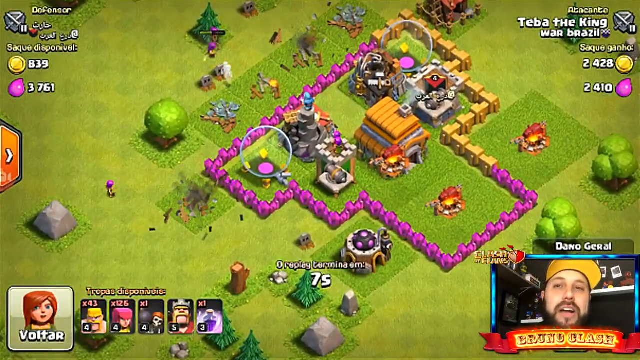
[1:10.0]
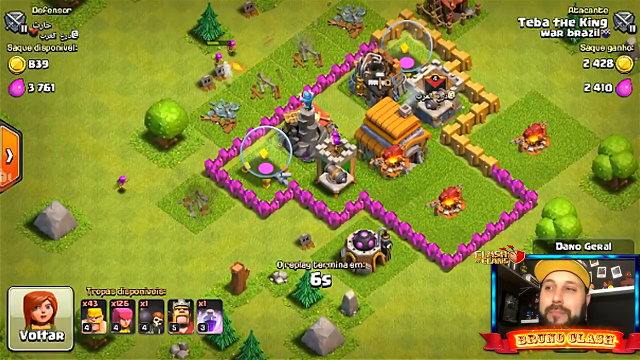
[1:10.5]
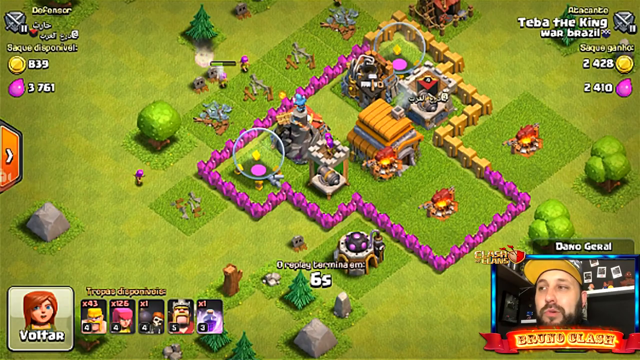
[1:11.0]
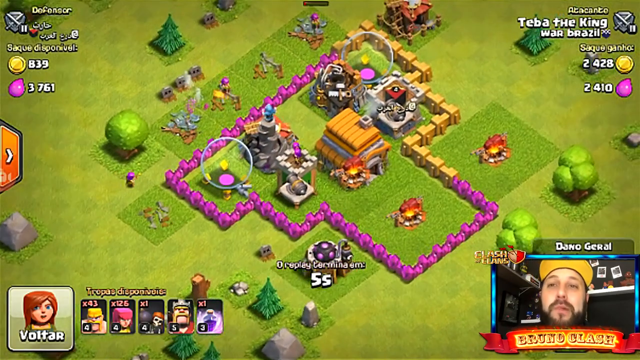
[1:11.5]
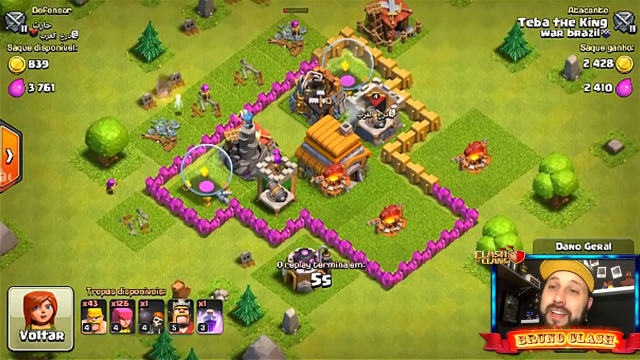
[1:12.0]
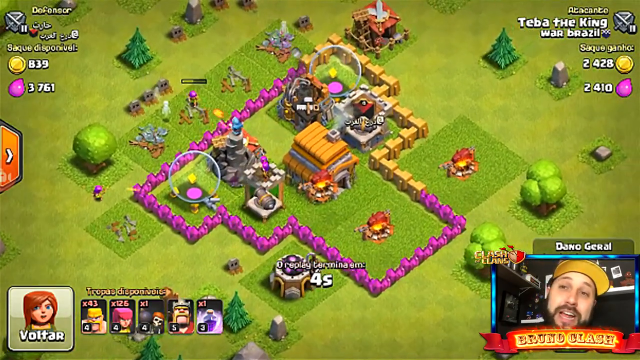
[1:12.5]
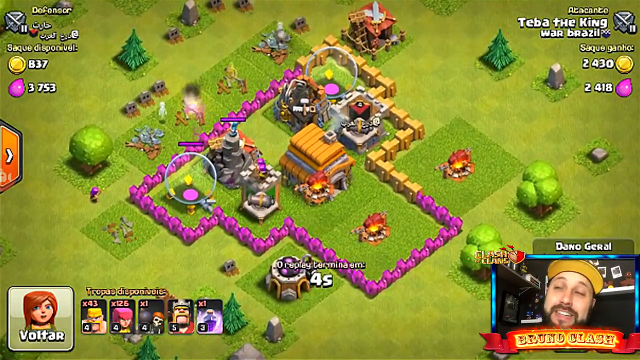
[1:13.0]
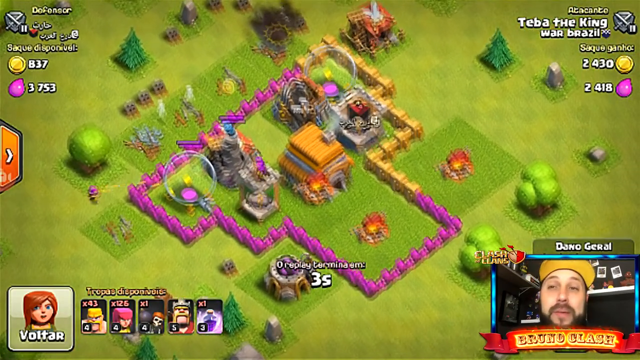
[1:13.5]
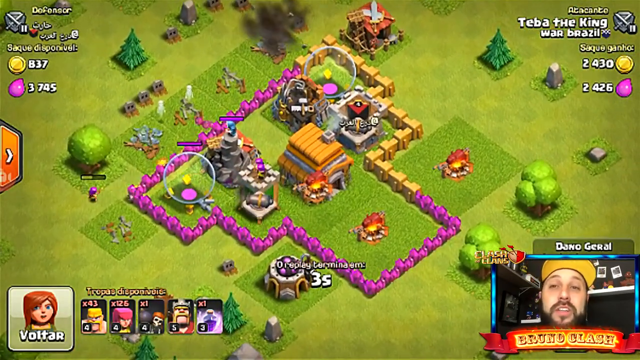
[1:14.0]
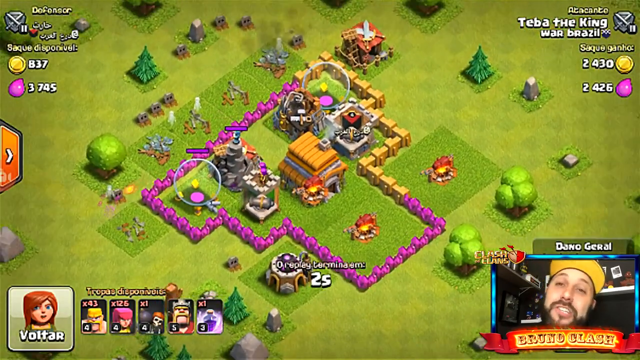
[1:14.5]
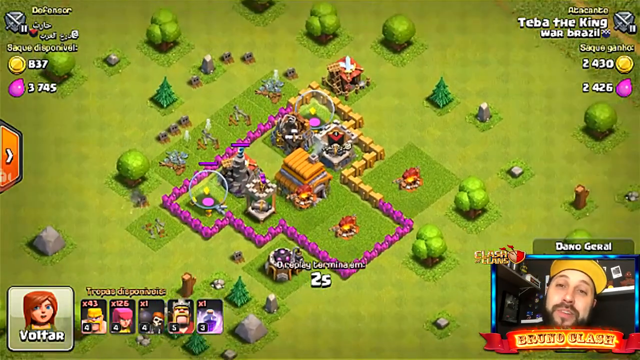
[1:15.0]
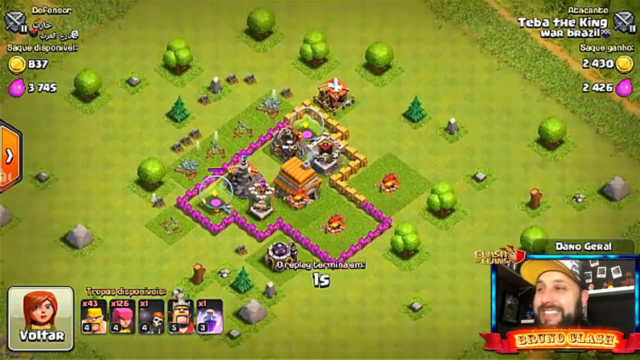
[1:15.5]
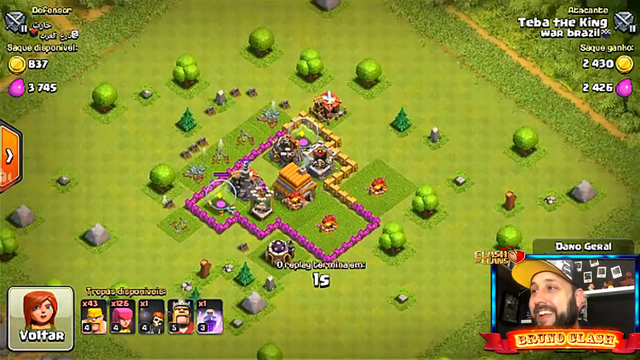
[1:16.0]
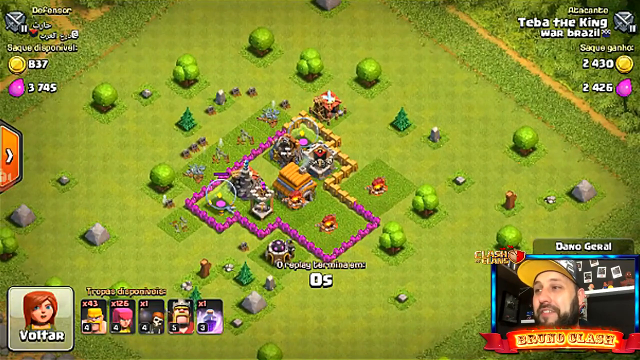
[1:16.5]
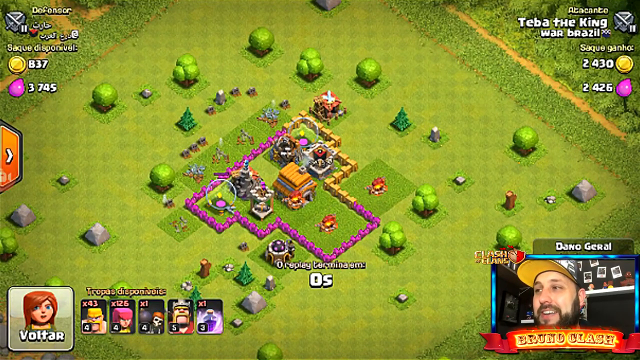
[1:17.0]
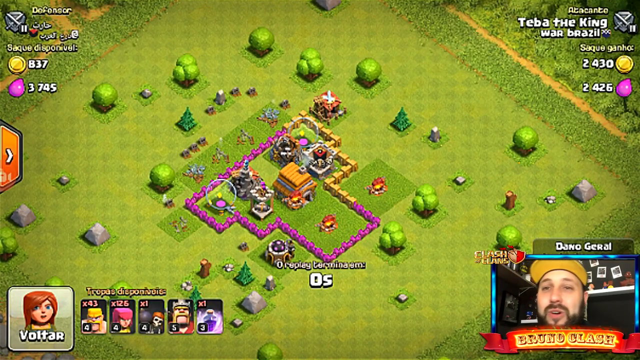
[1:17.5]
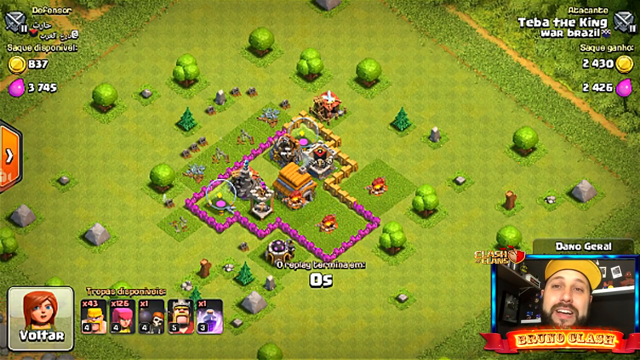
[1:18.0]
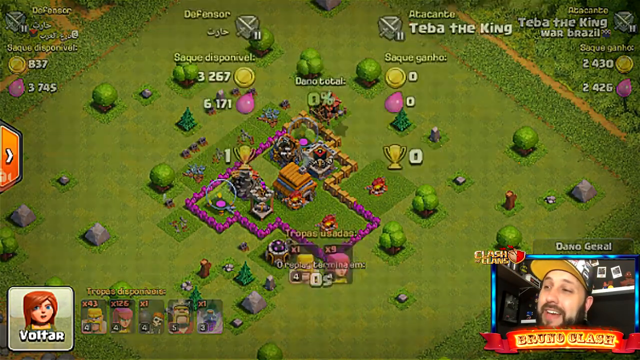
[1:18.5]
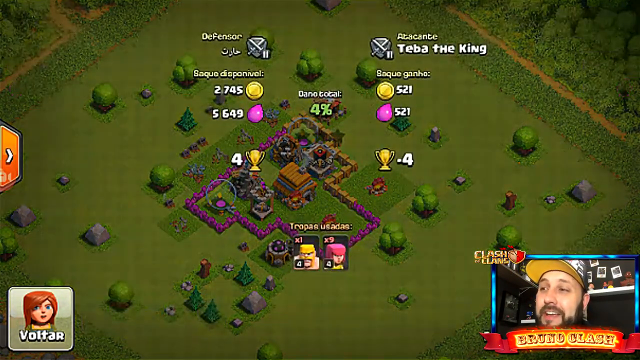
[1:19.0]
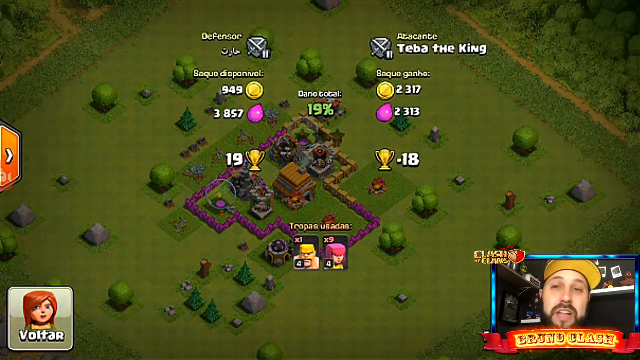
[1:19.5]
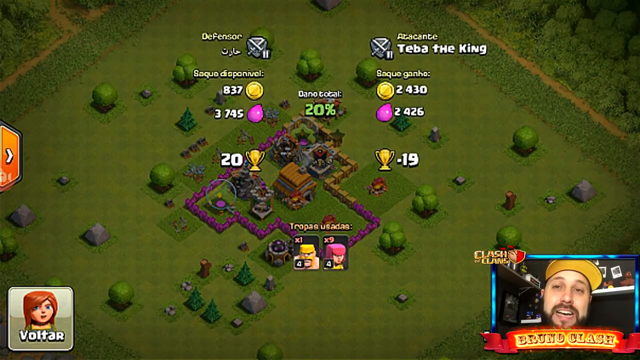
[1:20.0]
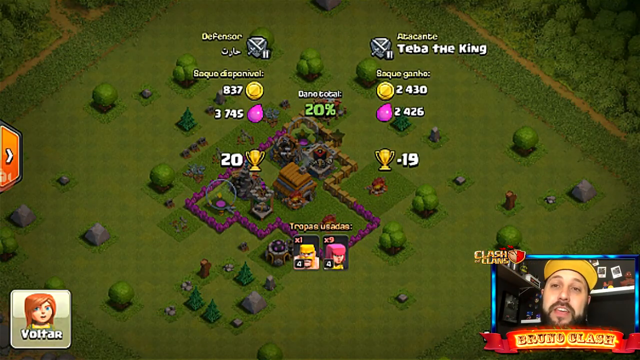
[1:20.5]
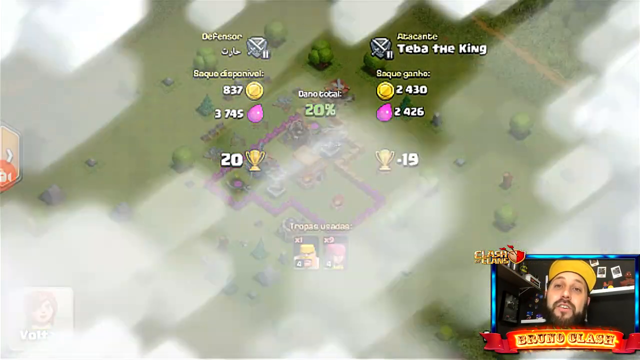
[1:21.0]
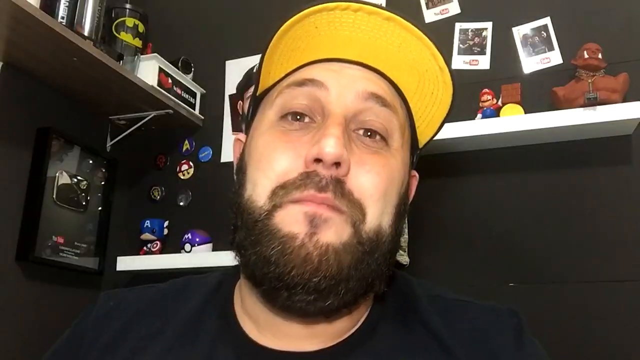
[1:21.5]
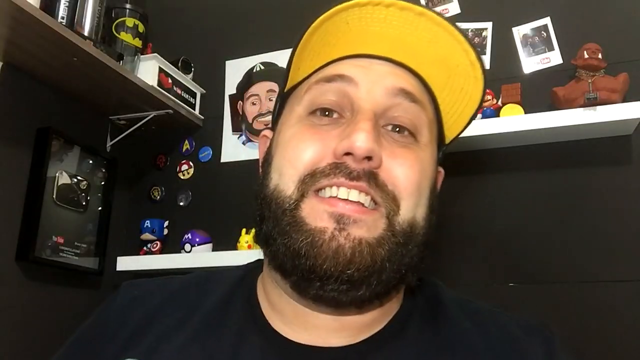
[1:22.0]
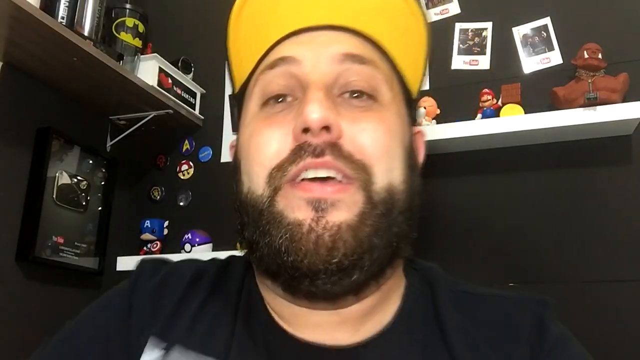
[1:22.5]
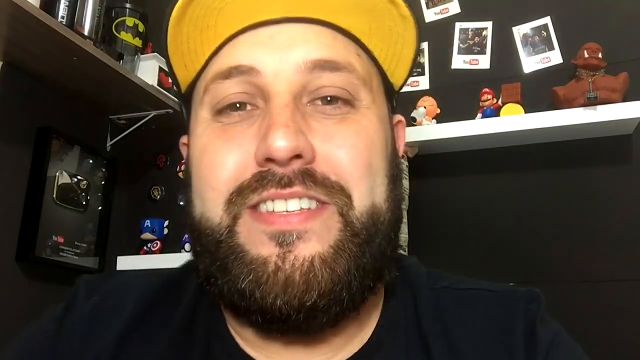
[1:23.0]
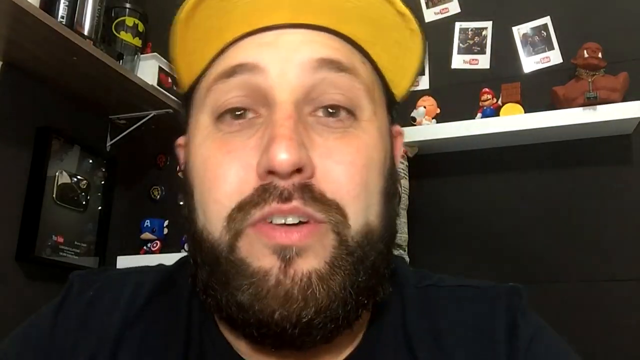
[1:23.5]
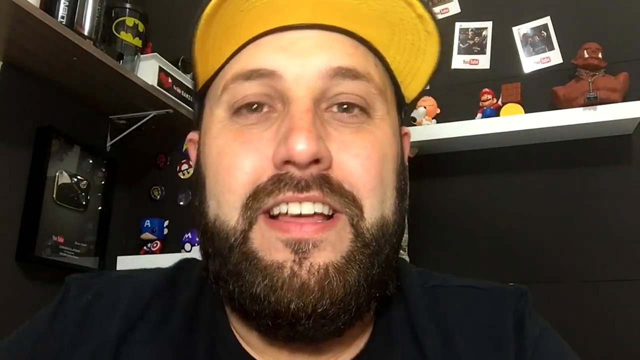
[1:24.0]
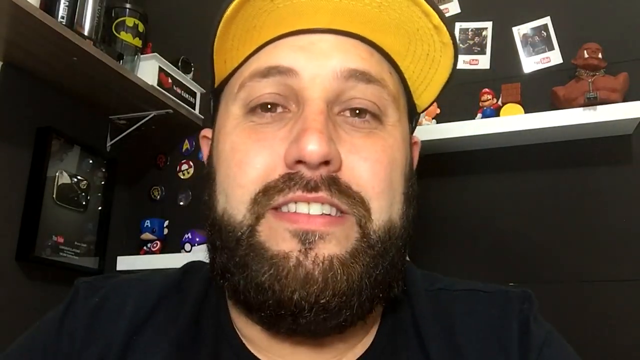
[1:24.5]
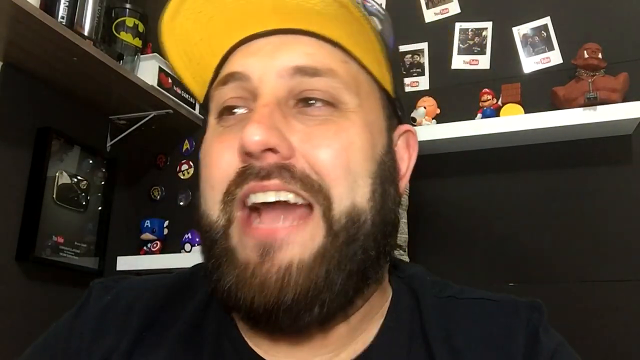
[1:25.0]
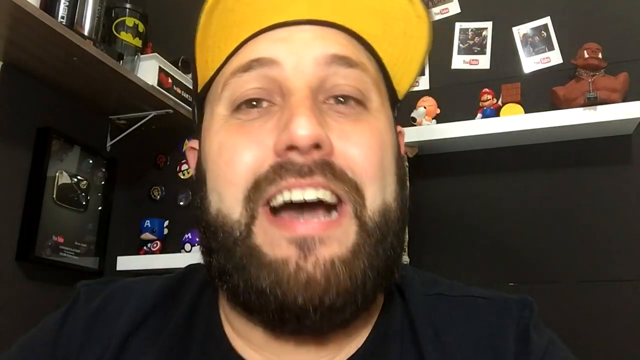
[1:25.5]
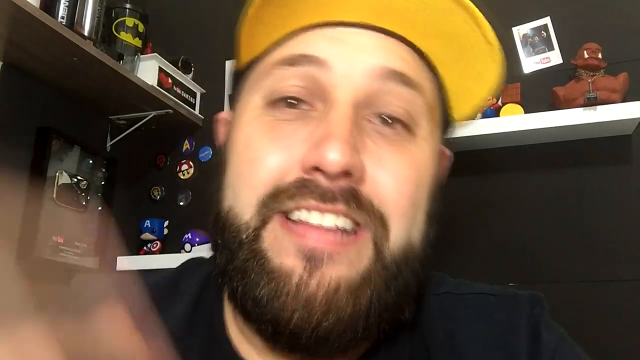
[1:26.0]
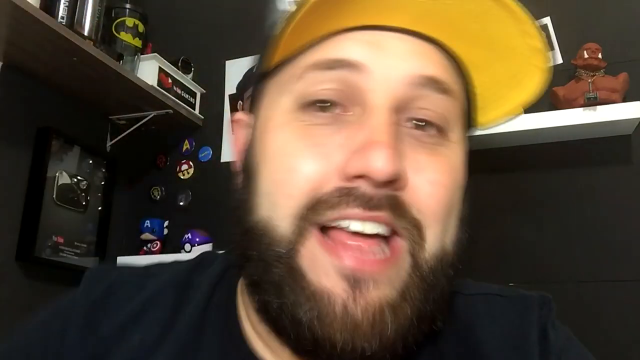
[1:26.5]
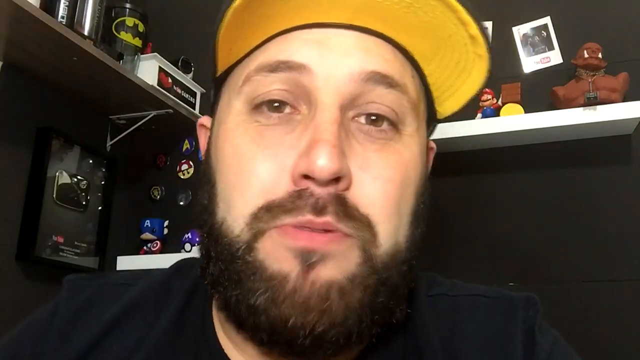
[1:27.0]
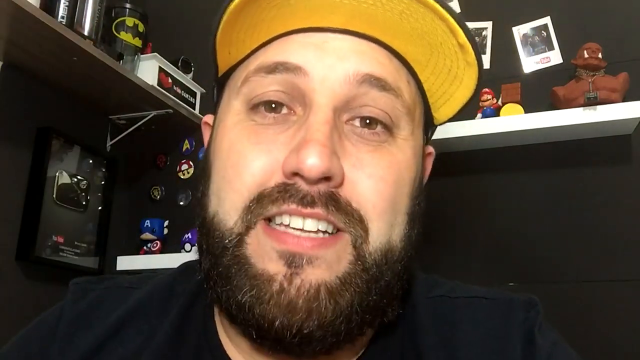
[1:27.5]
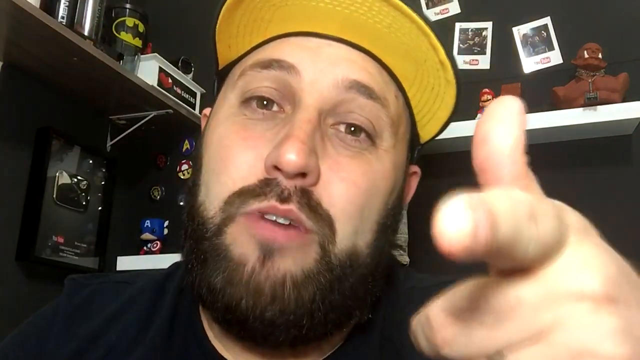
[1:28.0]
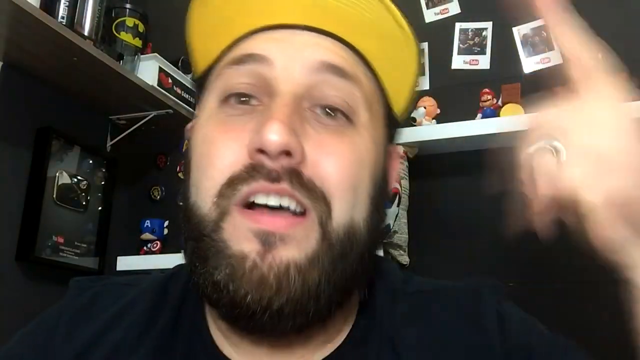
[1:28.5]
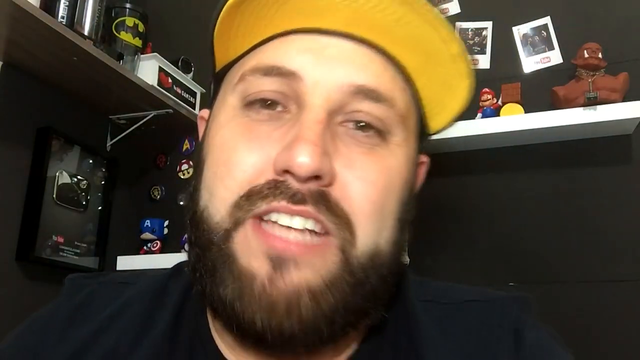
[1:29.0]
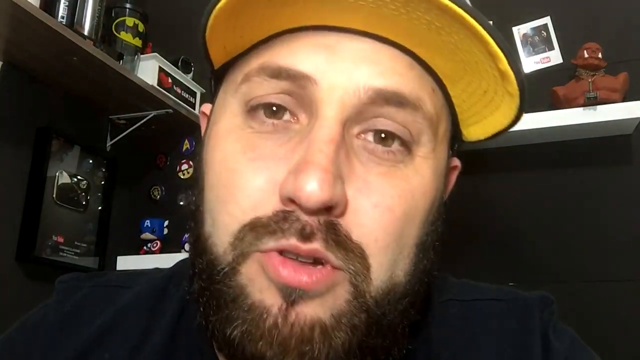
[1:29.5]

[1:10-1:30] The wooden boxes and coins seem to disappear. Characters are standing up on big structures, almost like pedestals, on the inside of a pink and orange barrier. They shoot at each other and out at the characters that destroyed the wooden boxes, and they appear to kill them all as the action slows down. What looks like a tally board comes up, then mists out. The player appears on screen wearing a cap with a yellow underside on the bill, talking to the camera.